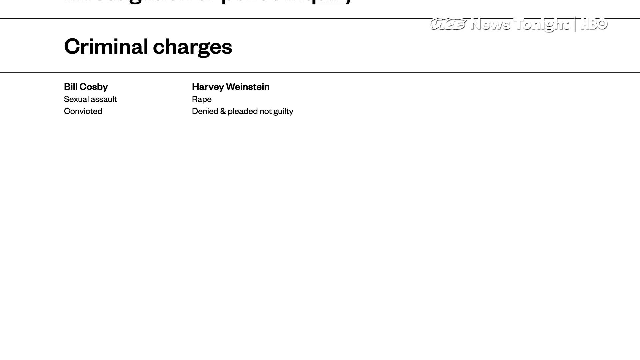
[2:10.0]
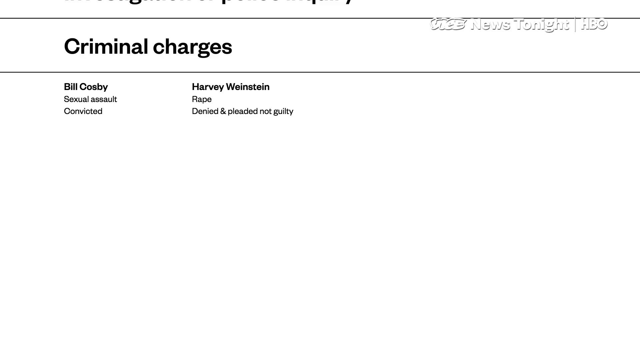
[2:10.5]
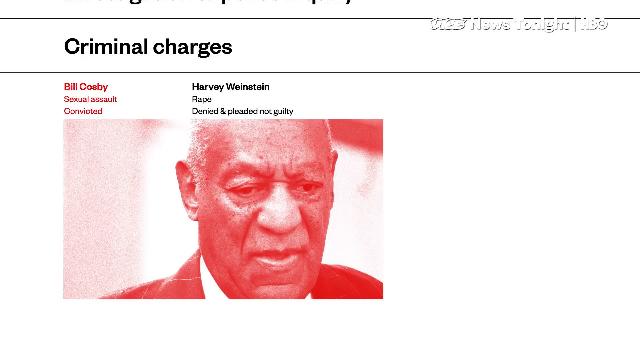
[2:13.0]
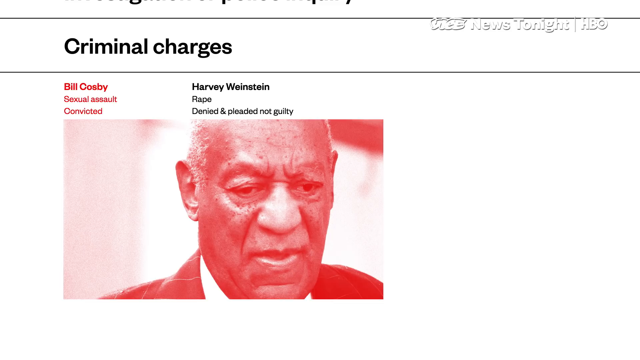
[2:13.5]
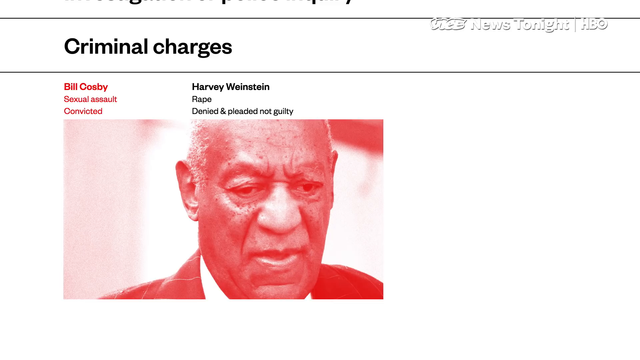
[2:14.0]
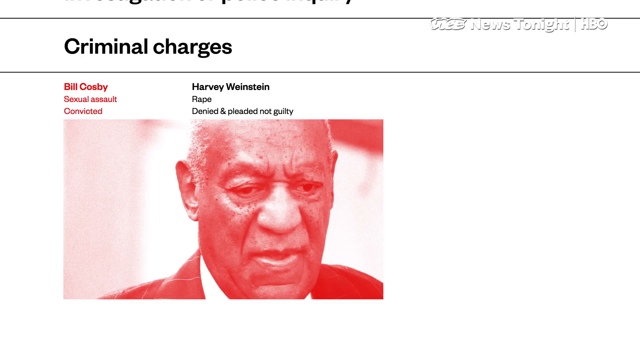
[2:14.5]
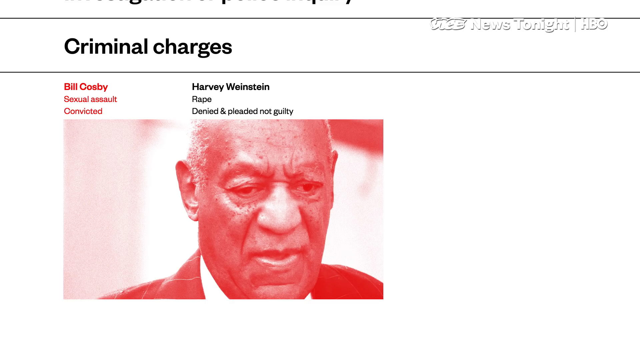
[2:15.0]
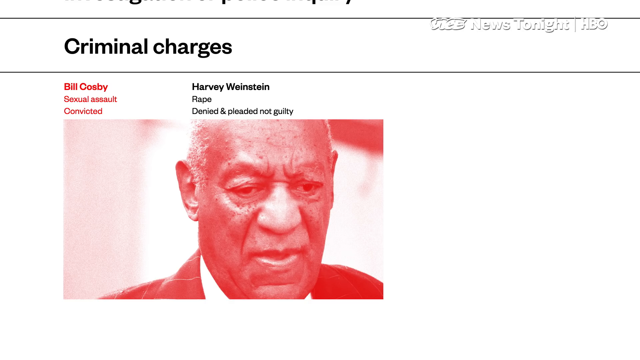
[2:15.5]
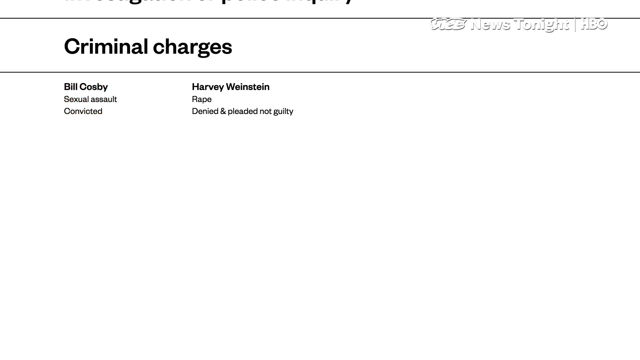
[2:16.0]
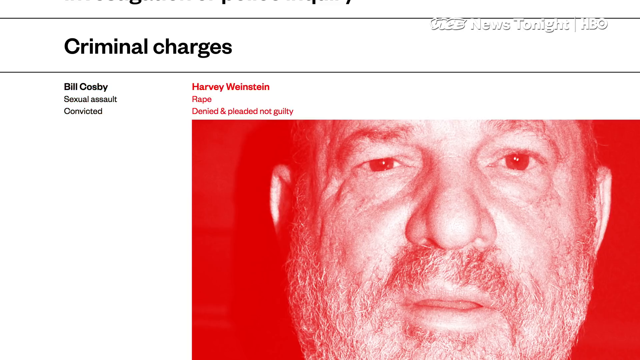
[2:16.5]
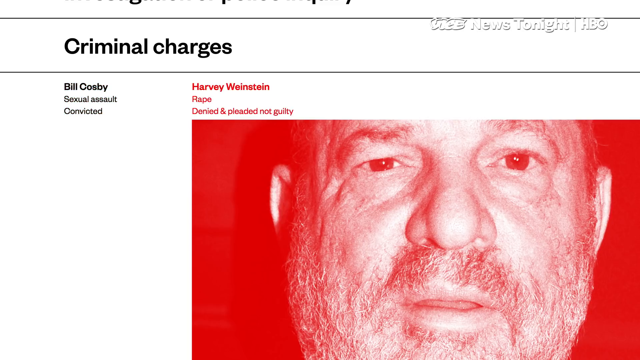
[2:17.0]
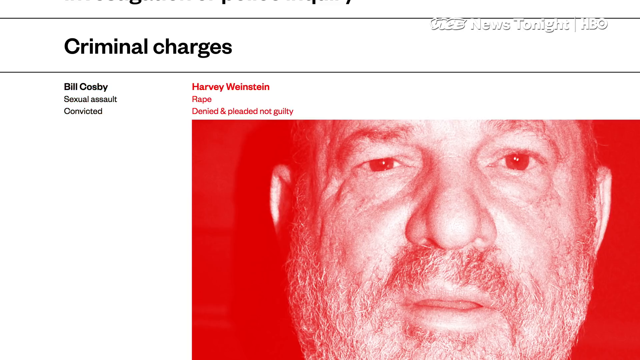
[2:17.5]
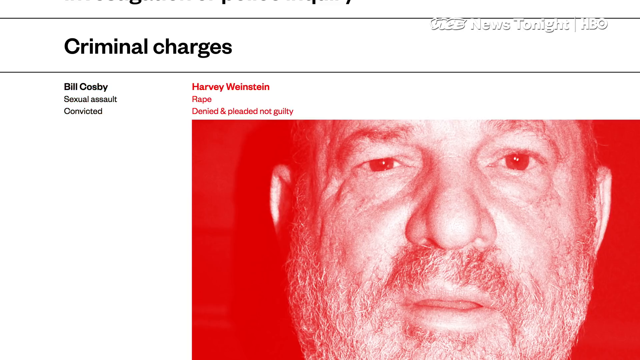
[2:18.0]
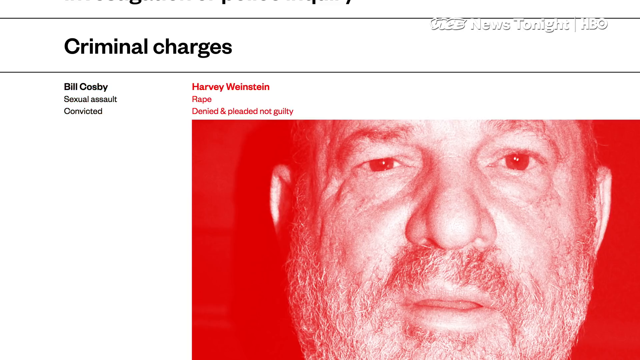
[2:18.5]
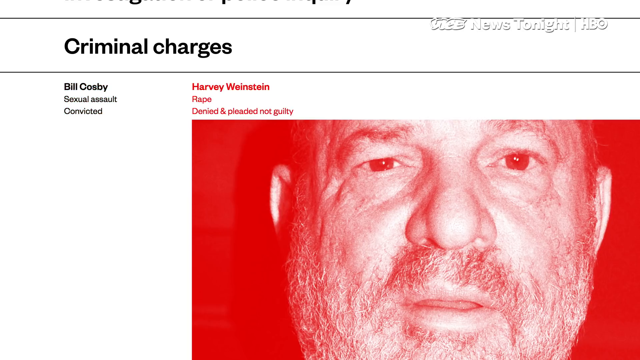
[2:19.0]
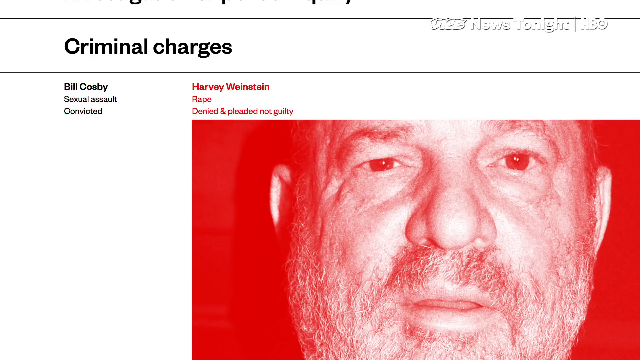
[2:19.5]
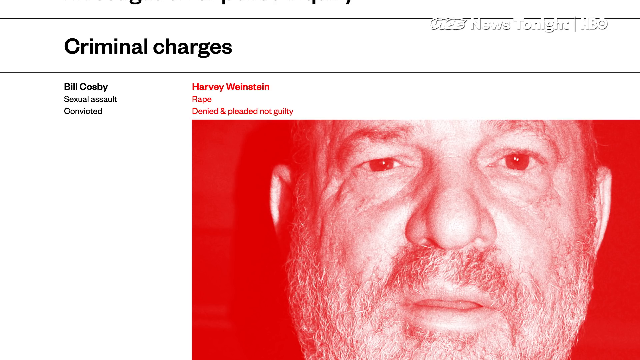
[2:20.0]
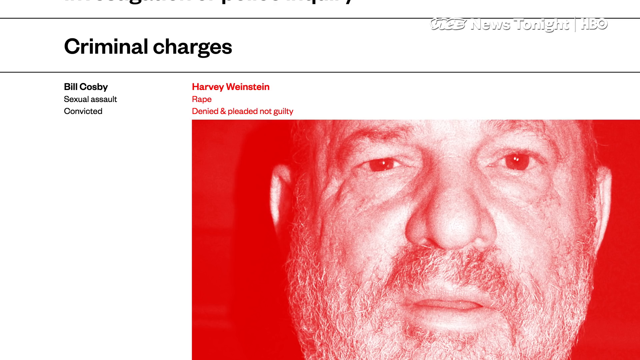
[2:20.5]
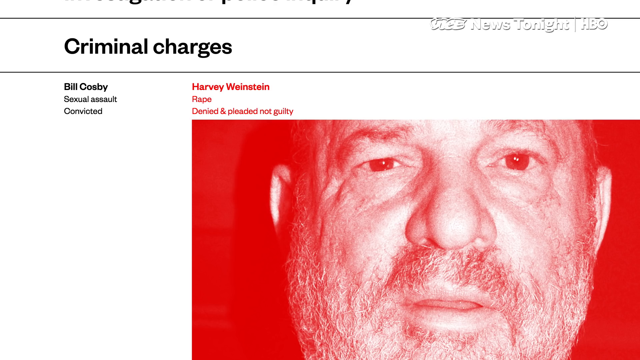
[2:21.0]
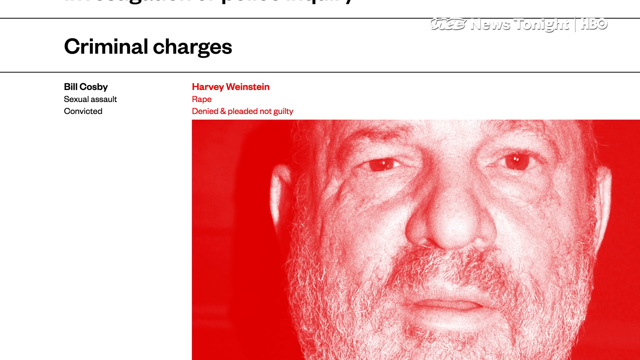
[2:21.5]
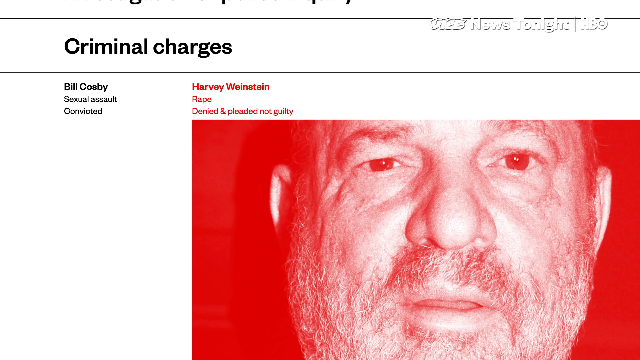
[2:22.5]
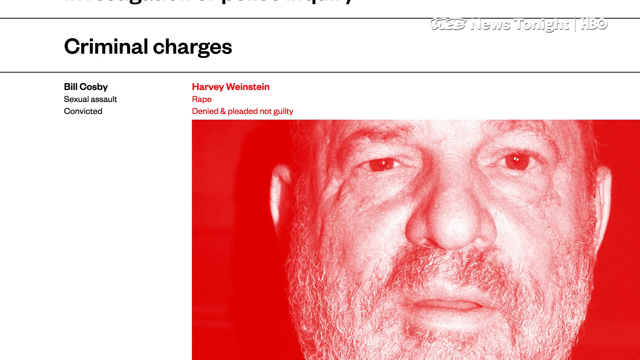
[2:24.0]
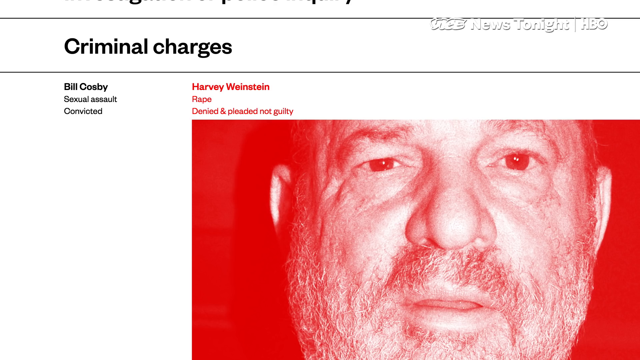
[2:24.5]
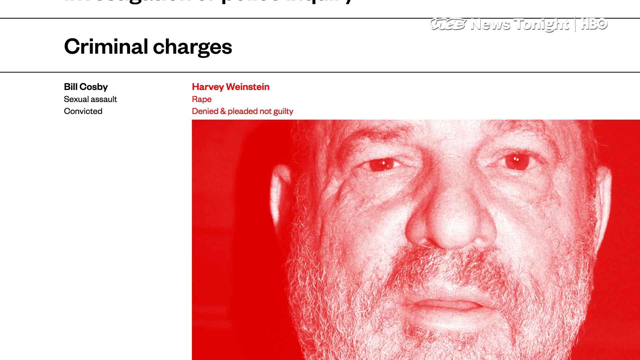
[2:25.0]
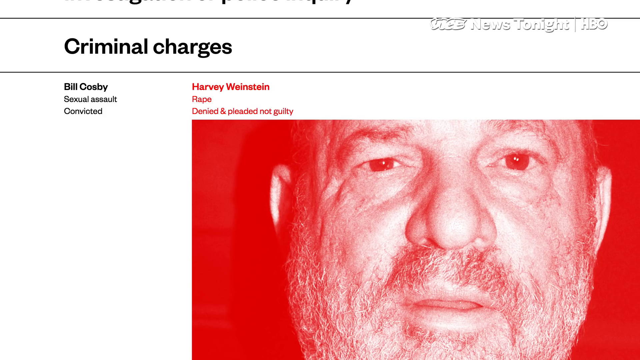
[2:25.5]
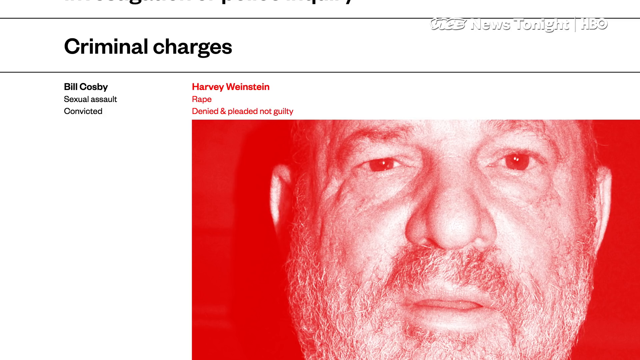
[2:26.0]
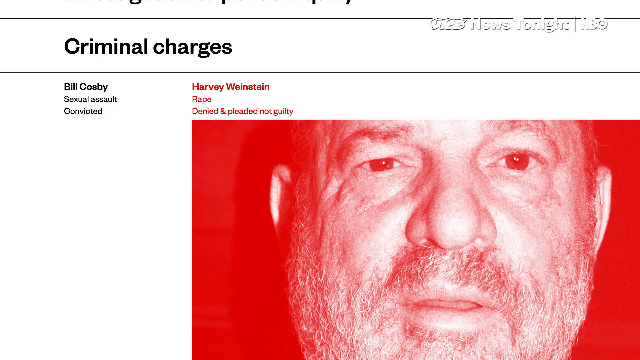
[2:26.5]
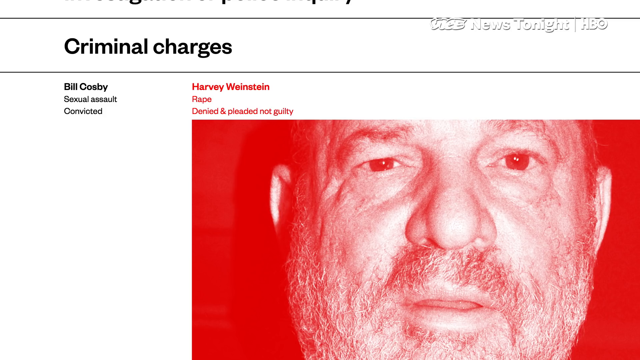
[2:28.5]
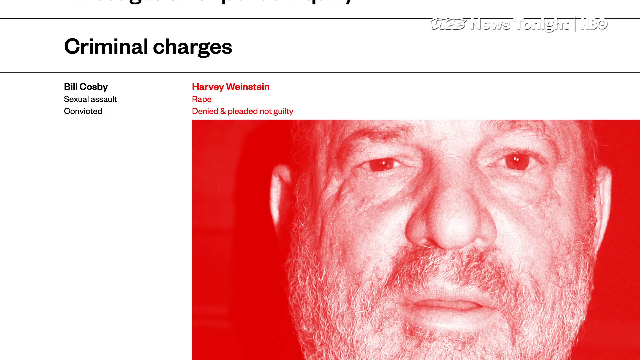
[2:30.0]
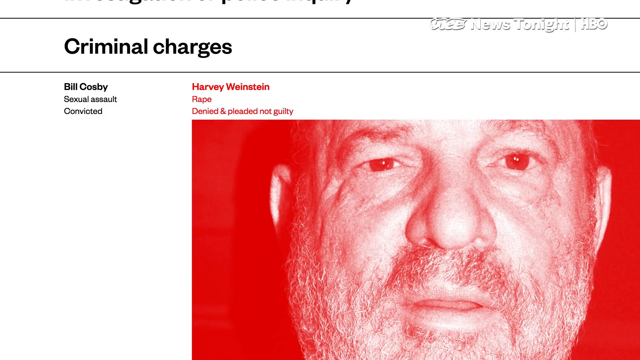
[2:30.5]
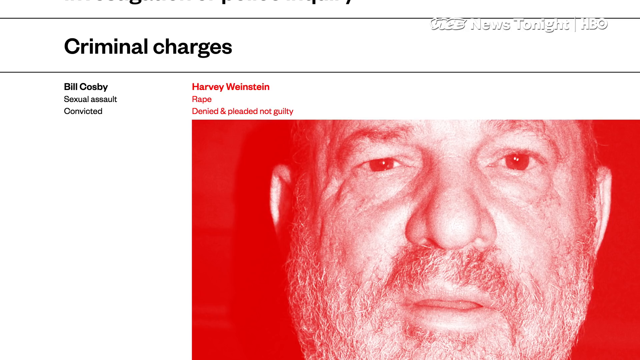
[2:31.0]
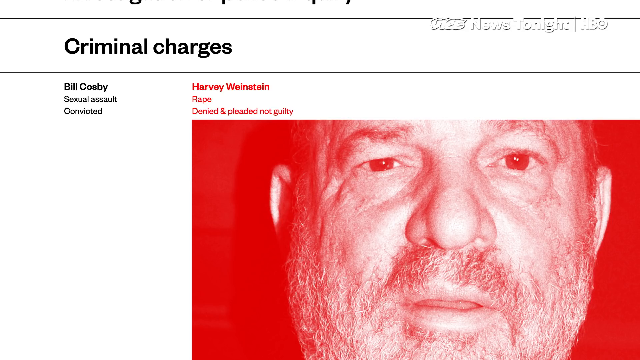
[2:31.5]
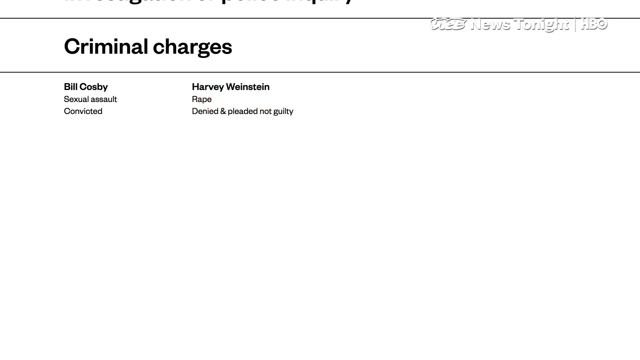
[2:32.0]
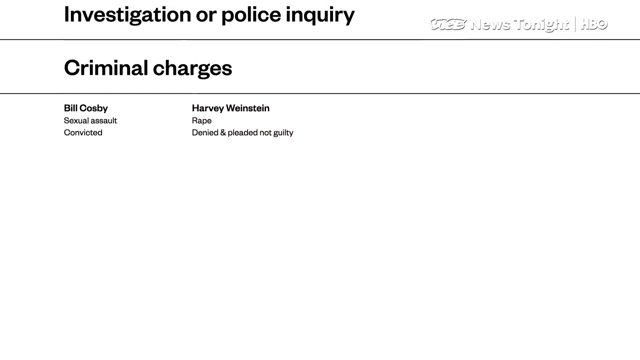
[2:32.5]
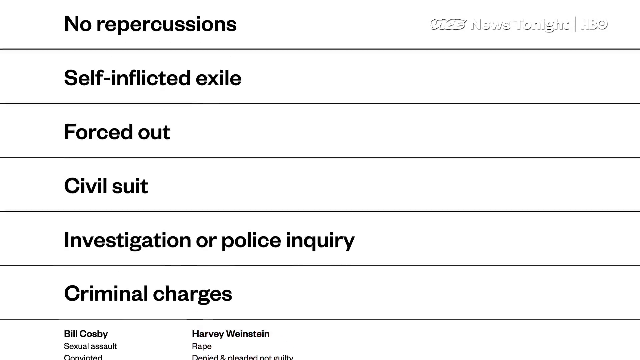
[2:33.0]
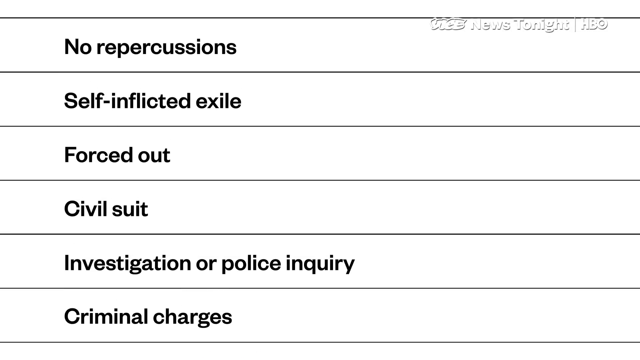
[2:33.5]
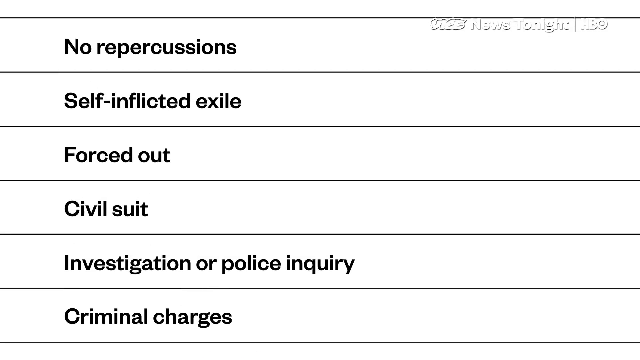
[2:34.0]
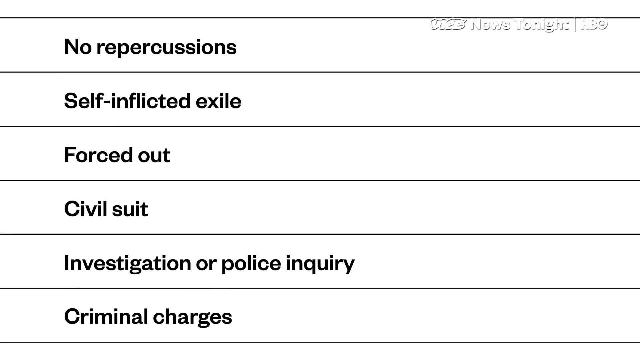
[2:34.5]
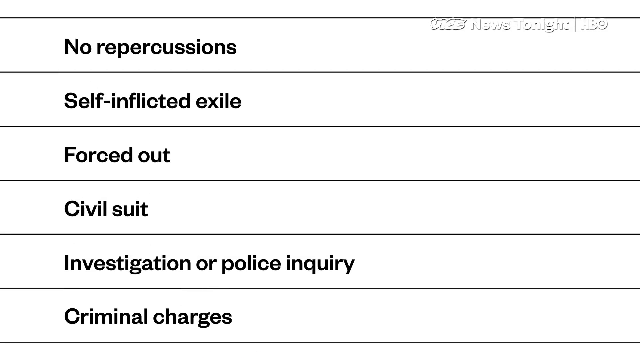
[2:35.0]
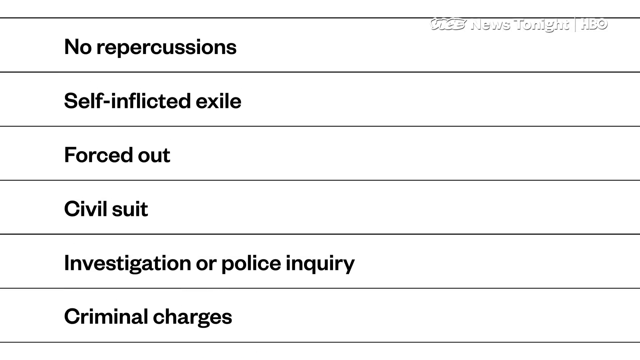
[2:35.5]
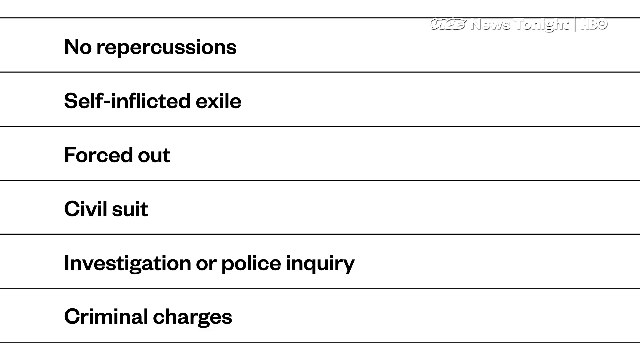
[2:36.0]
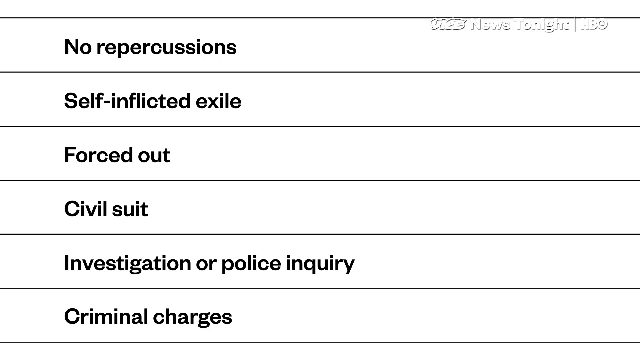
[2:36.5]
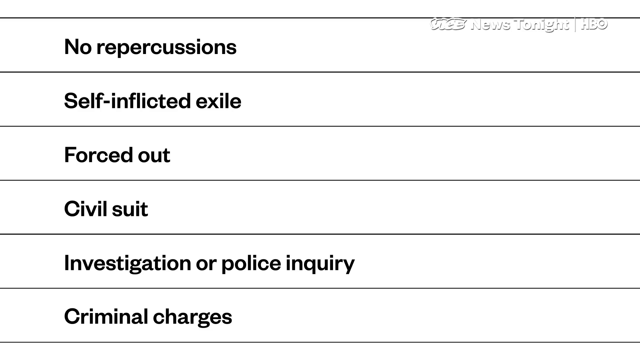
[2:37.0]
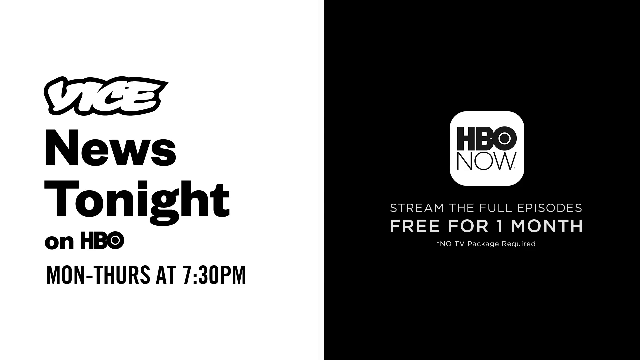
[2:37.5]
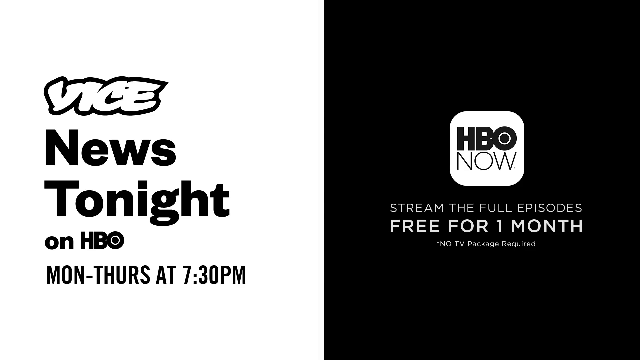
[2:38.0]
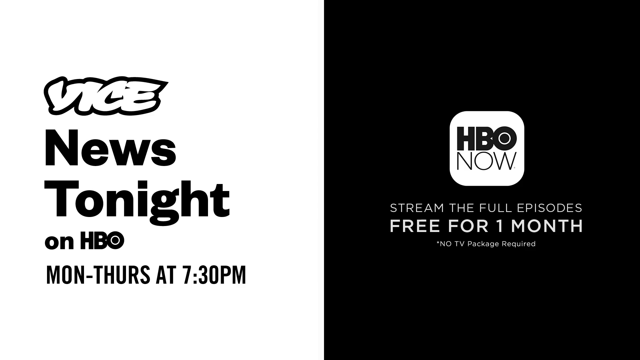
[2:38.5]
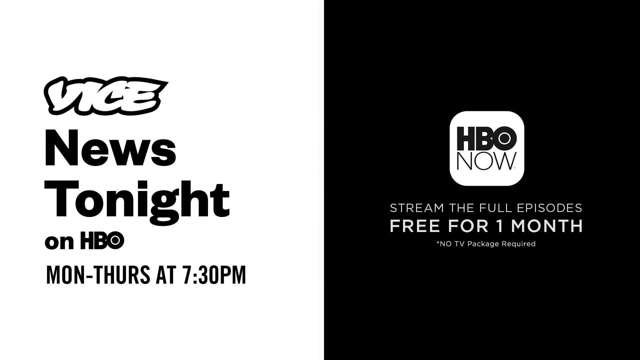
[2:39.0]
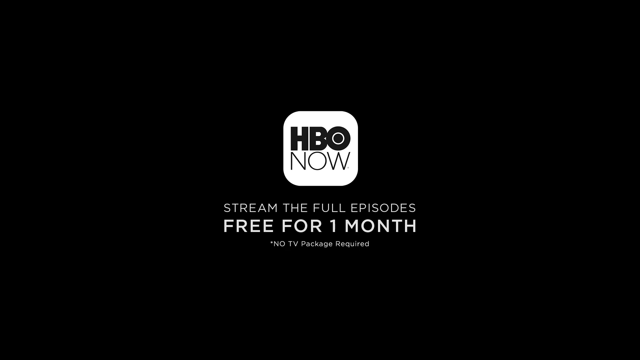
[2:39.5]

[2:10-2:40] The list shows two names, Bill Cosby and Harvey Weinstein. Bill Cosby is highlighted in red on the list and a red-and-white monochrome picture shows him looking down, crestfallen, eyes turned downward. A picture of Harvey Weinstein follows, similar to the earlier black-and-white one but this time in red-and-white monochrome, and it stays on screen for a long time. The category captions are shown again: "no repercussions", "self-inflicted exile", "forced out", "civil suit", "investigation or police inquiry" and "criminal charges". Then a caption in white on the left of the screen reads "Vice News Tonight on HBO, Monday to Thursday at 7.30 PM", and the right side reads "HBO Now. Stream the full episodes free for one month. No TV package required." An end card follows with just "HBO Now, stream the full episodes free for one month".